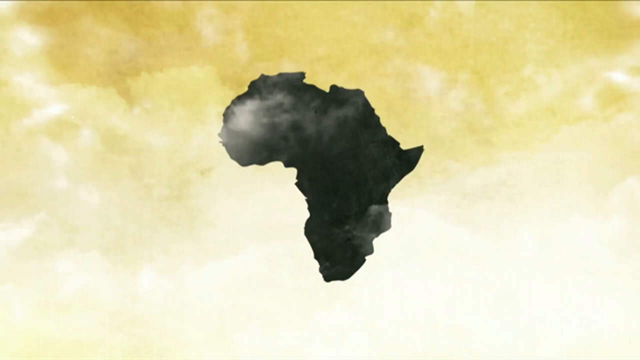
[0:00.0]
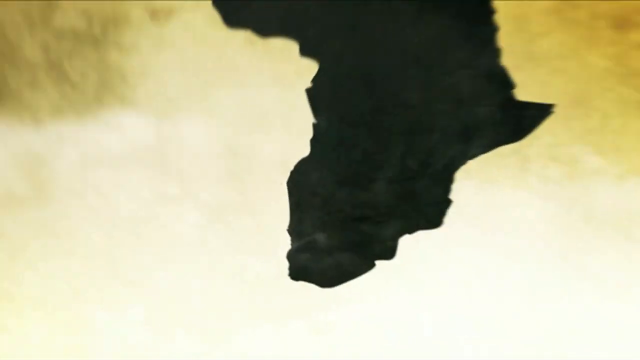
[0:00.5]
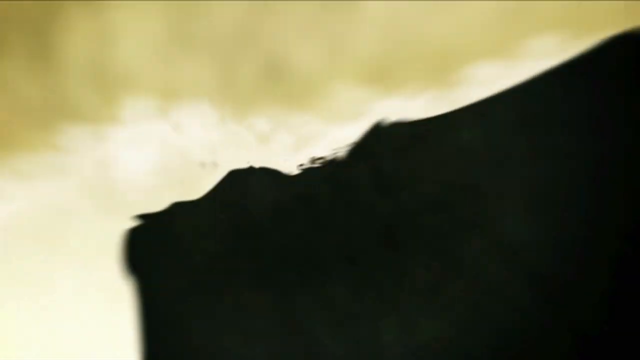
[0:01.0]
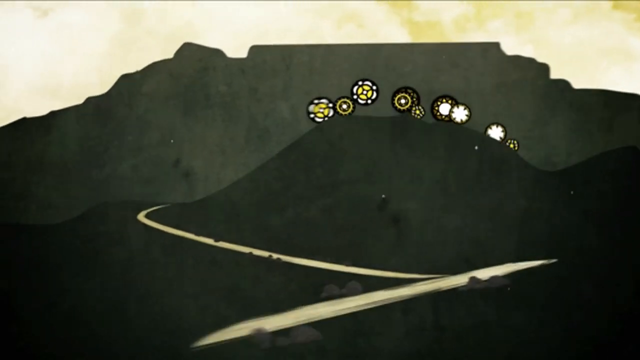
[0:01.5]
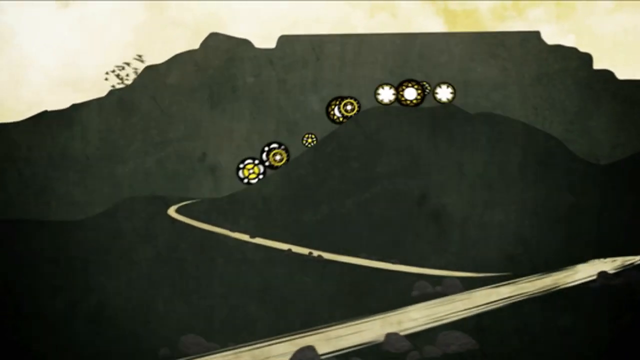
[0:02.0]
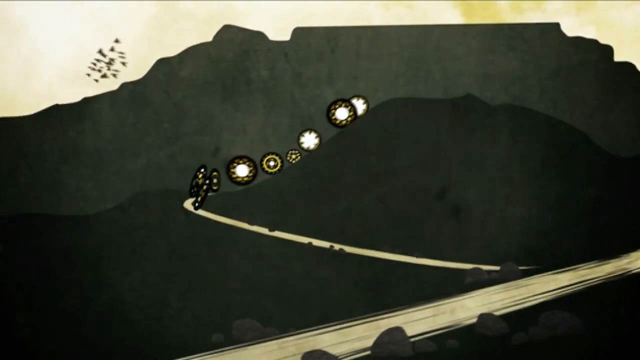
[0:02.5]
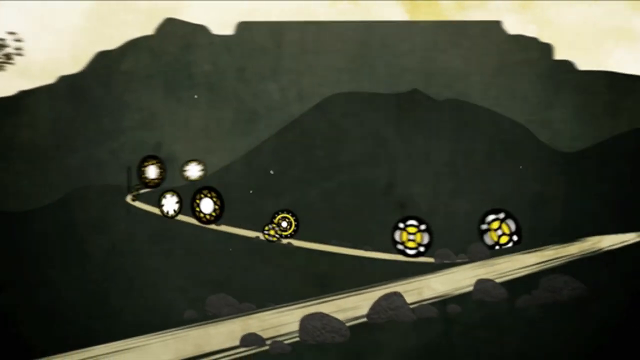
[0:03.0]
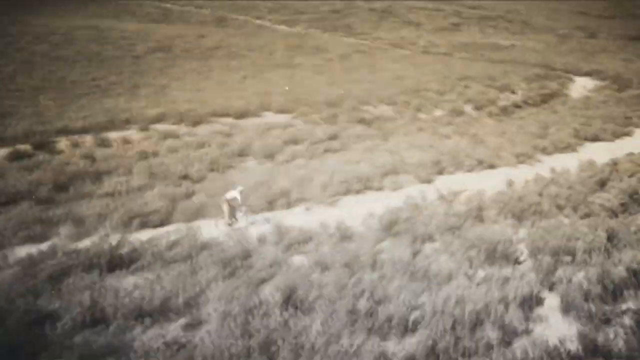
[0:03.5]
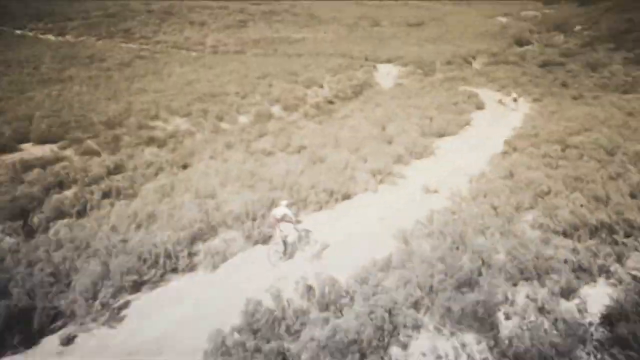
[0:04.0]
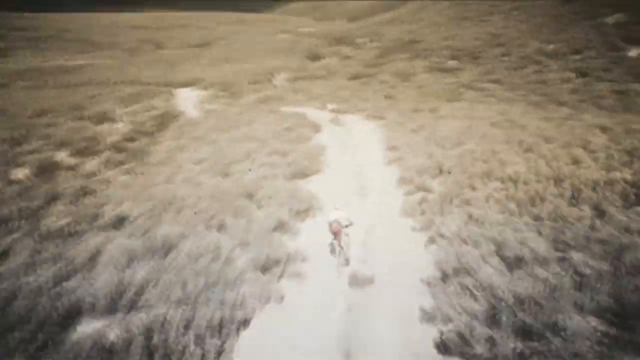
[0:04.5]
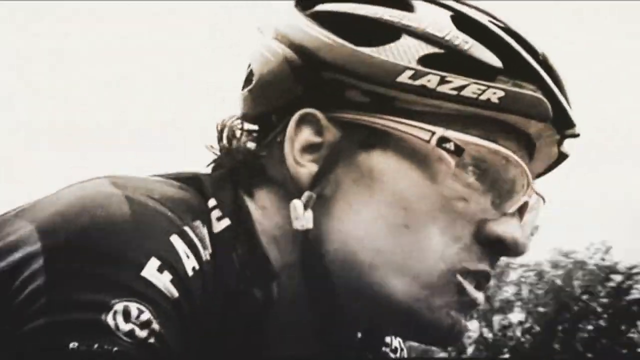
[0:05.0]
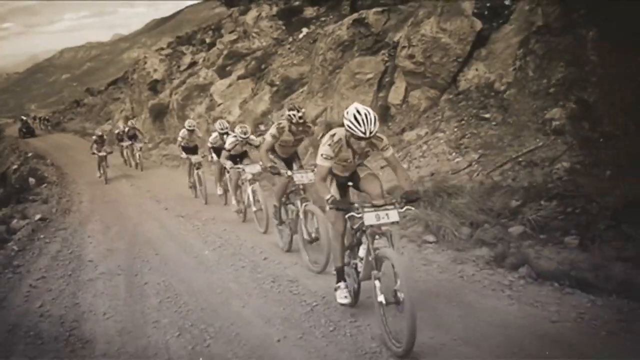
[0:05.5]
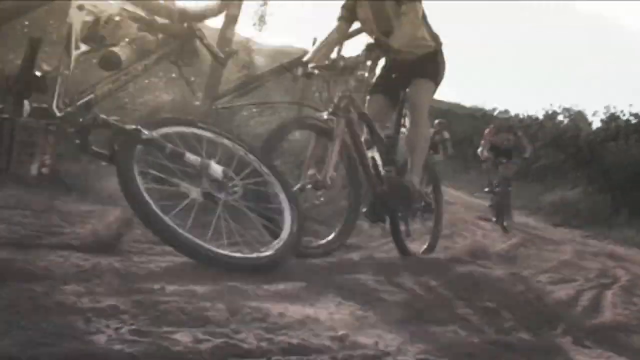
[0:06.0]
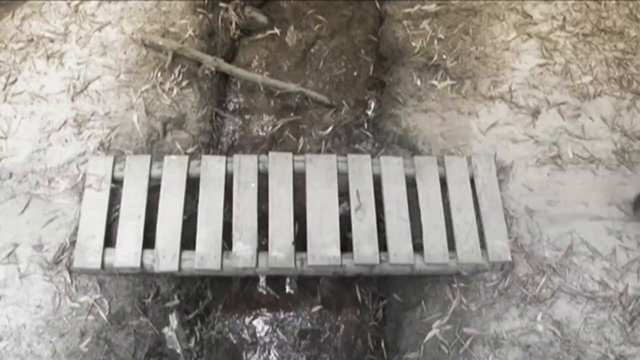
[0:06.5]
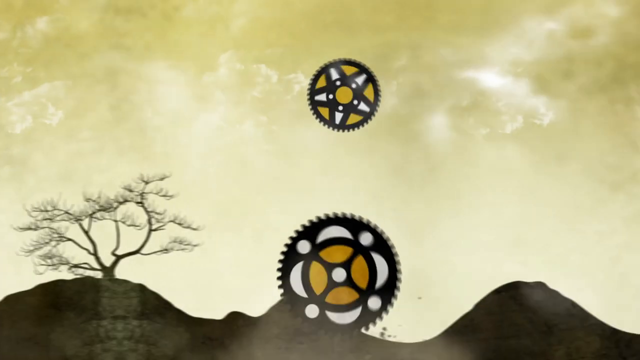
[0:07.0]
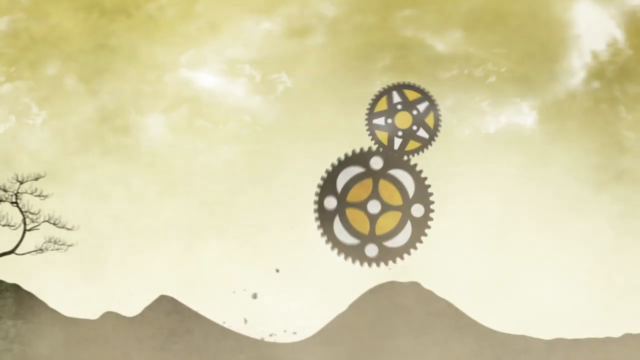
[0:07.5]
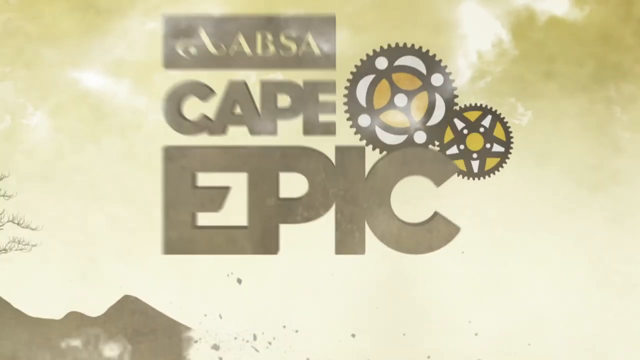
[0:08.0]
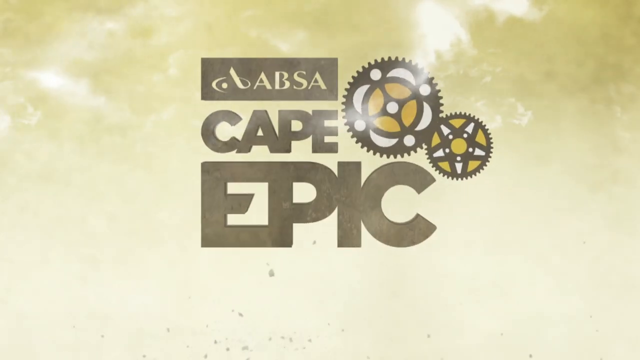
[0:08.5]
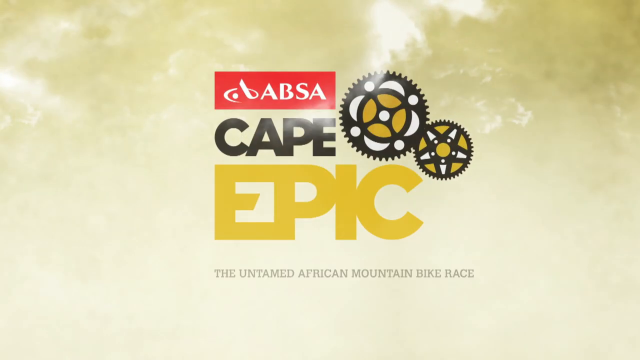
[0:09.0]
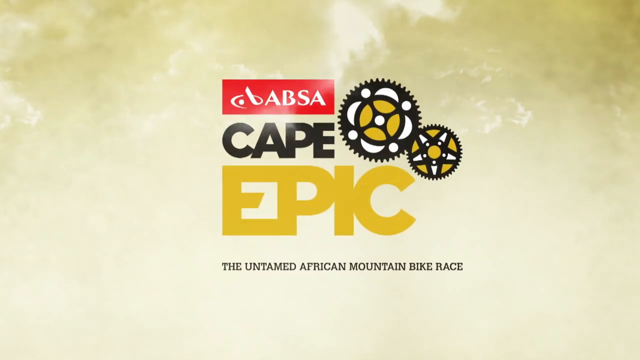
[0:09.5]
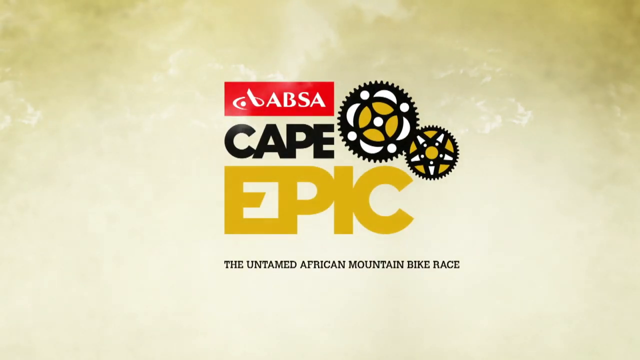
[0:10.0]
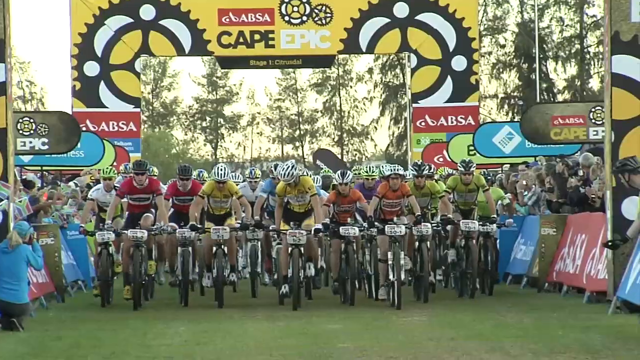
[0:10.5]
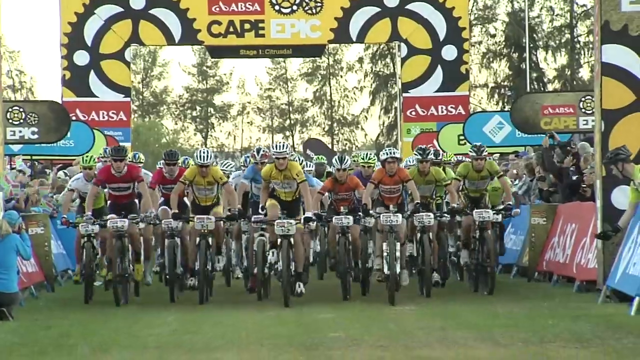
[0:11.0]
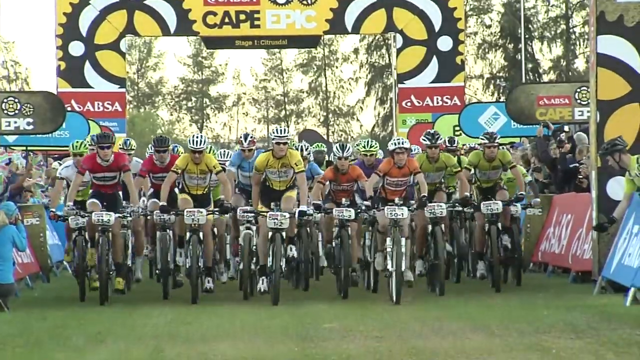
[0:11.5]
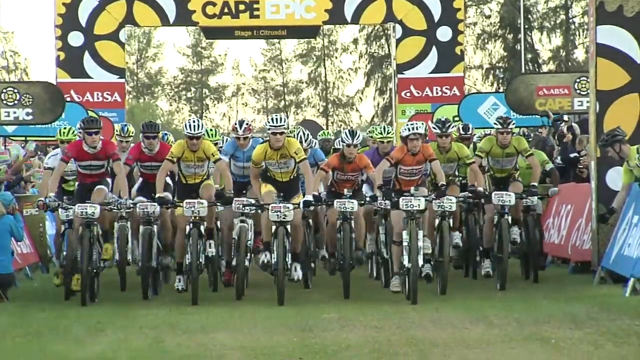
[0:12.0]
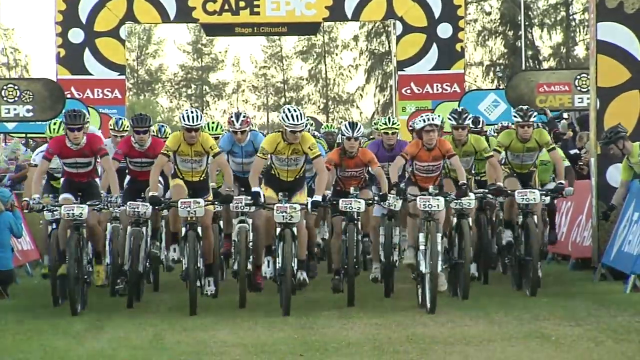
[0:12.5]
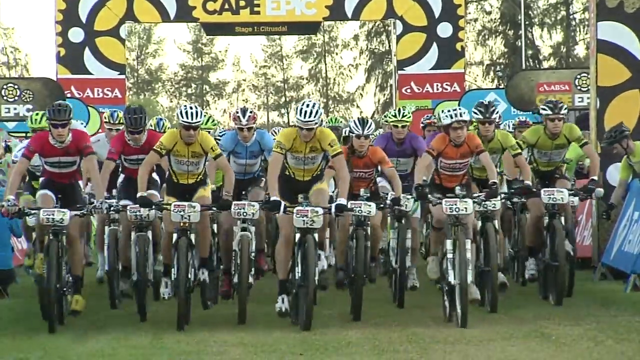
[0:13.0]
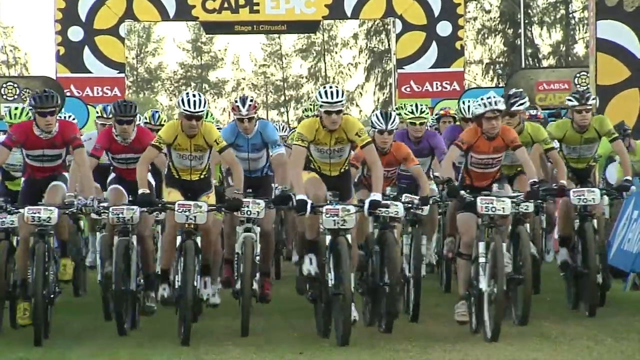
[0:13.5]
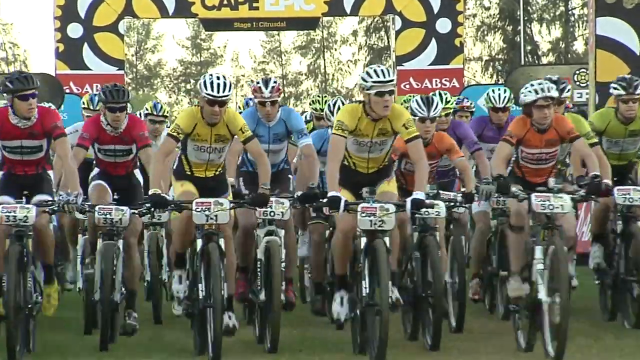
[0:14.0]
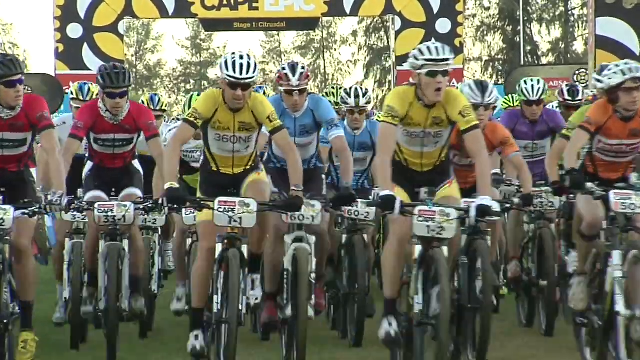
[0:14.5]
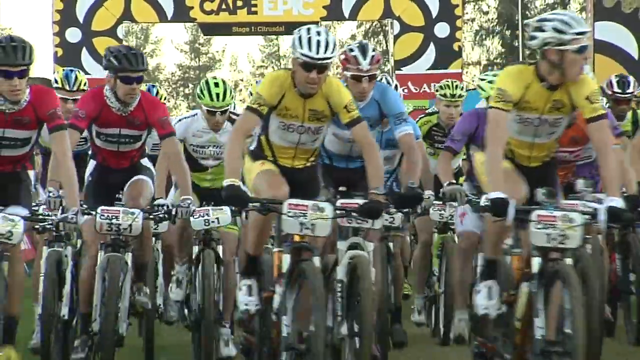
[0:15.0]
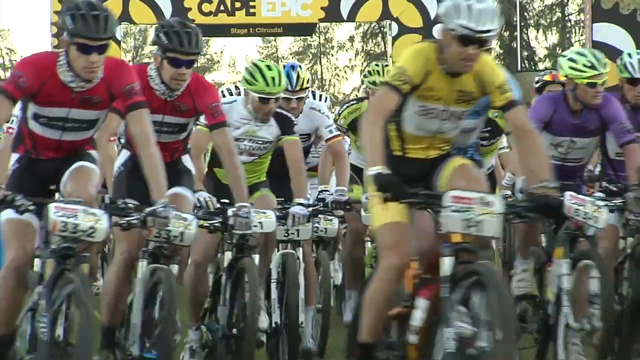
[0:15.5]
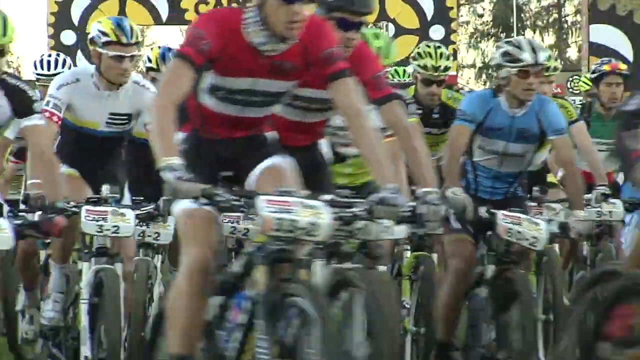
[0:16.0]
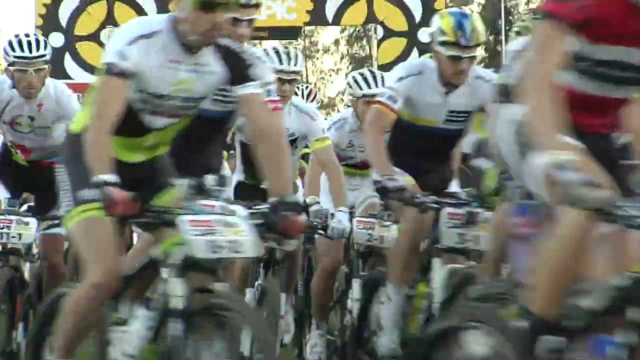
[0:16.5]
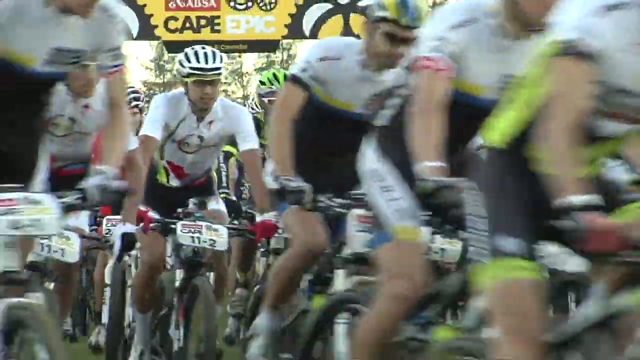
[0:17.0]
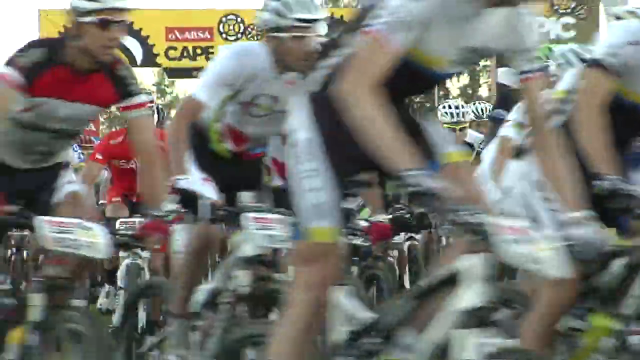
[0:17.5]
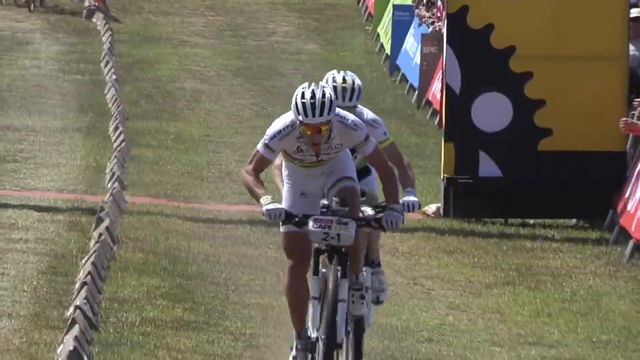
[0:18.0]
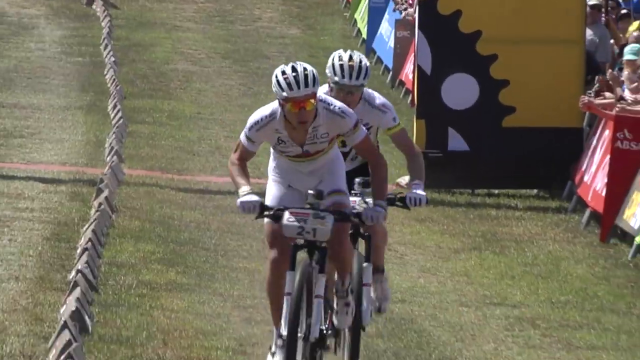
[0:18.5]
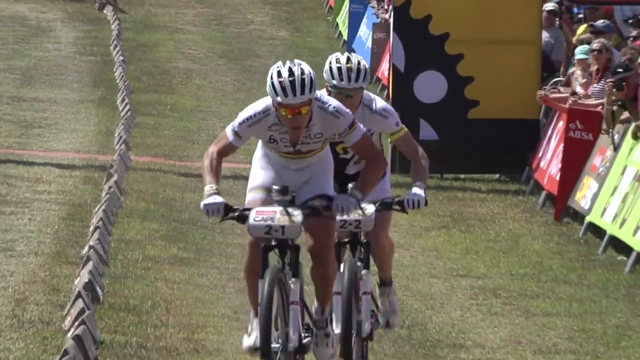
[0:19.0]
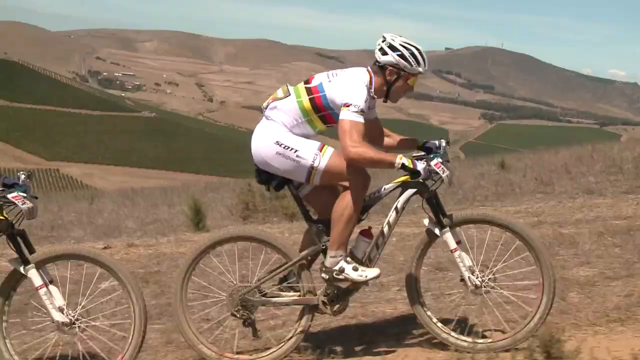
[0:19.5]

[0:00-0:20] The video opens on a yellow and cream colored background with a black shape of the African continent in the center of the screen. The view zooms into the southern part of the continent, and a CGI-looking hill appears with a mesa or plateau in the background. A road is visible, with illustrated wheels rolling along it. The scene changes to what looks like old footage of a dirt path in an arid climate, with people riding bikes along it. The footage is monochrome, two-tone in color. Several bikers ride up a hill along a dirt trail and cross a wooden bridge over a little creek. Text then appears reading "ABSA Cape Epic, the untamed African mountain bike race."